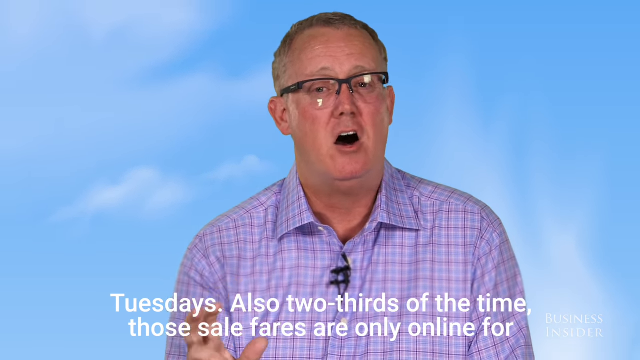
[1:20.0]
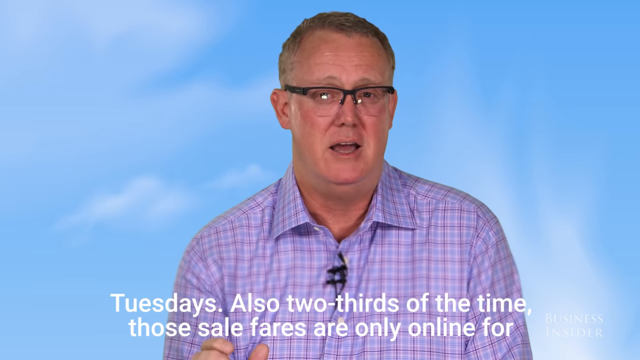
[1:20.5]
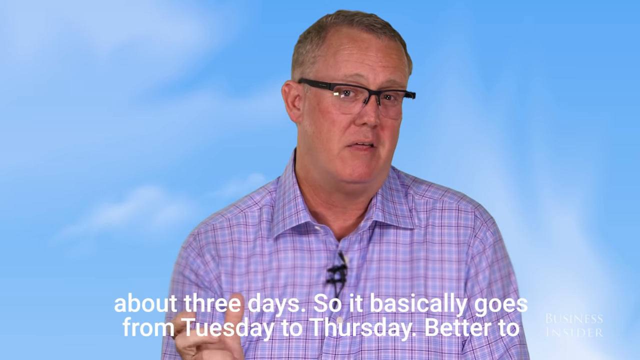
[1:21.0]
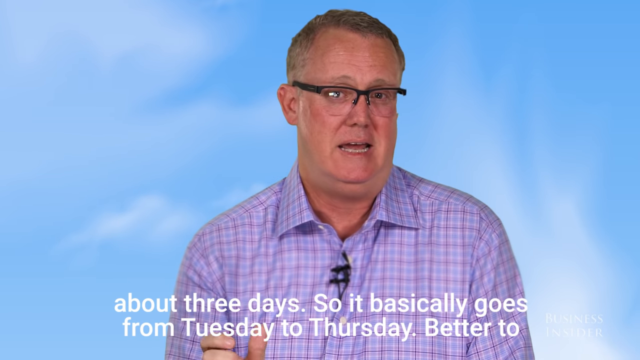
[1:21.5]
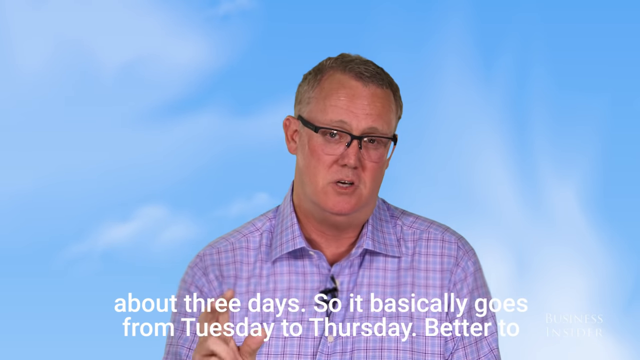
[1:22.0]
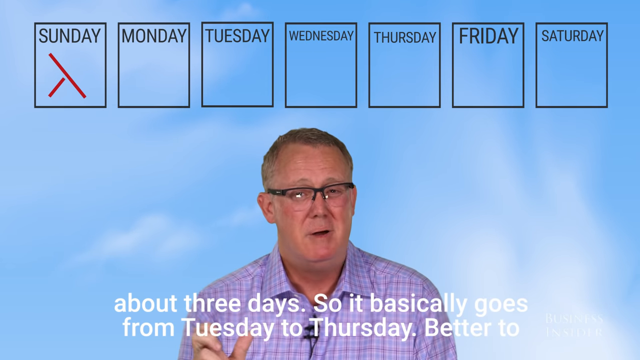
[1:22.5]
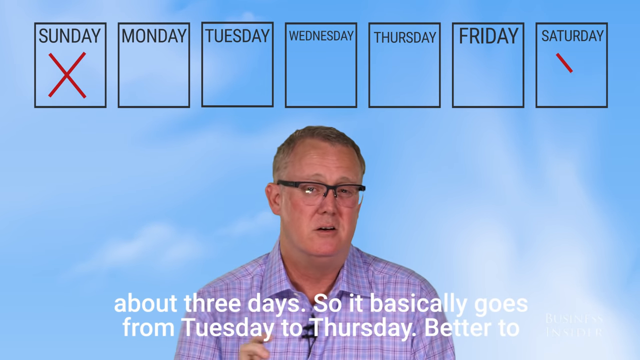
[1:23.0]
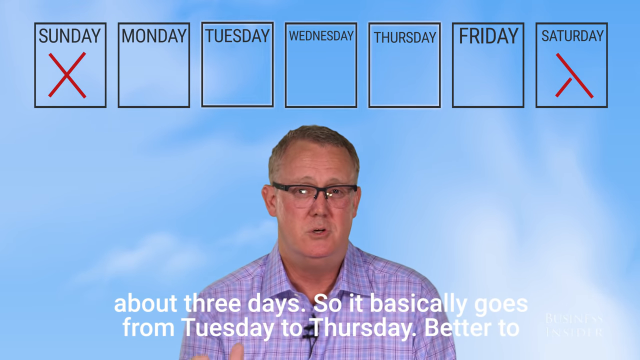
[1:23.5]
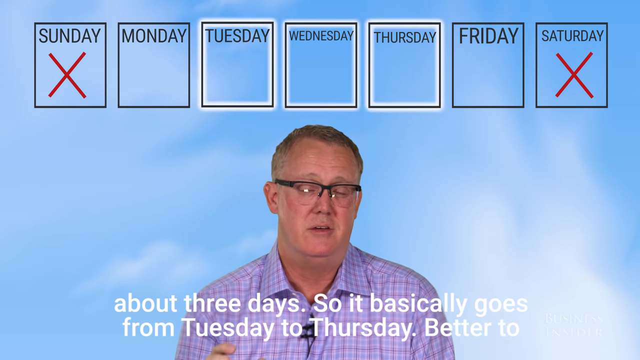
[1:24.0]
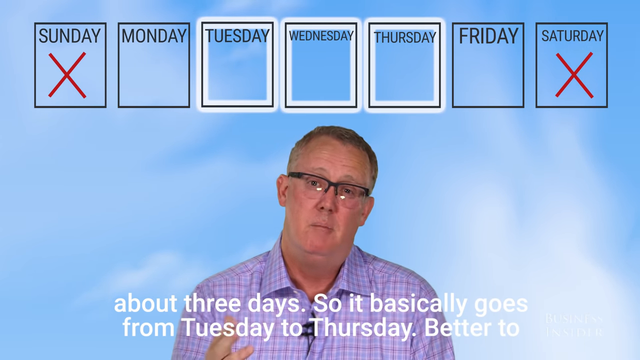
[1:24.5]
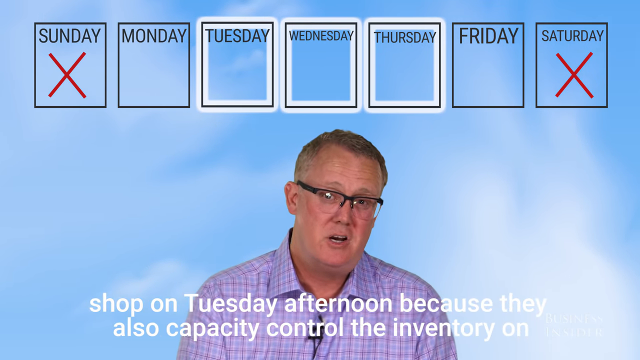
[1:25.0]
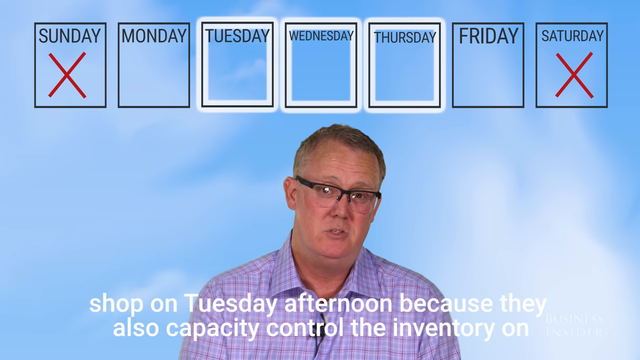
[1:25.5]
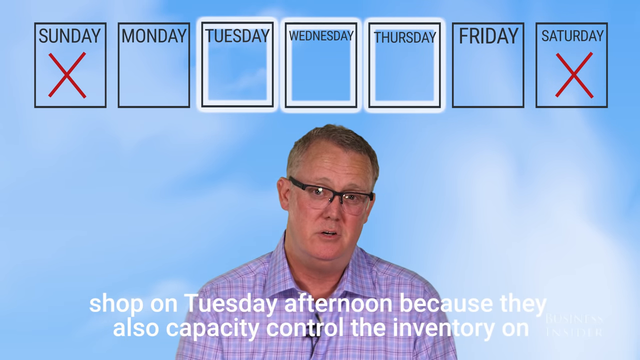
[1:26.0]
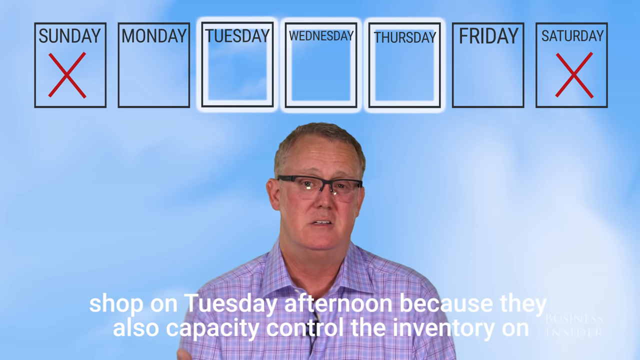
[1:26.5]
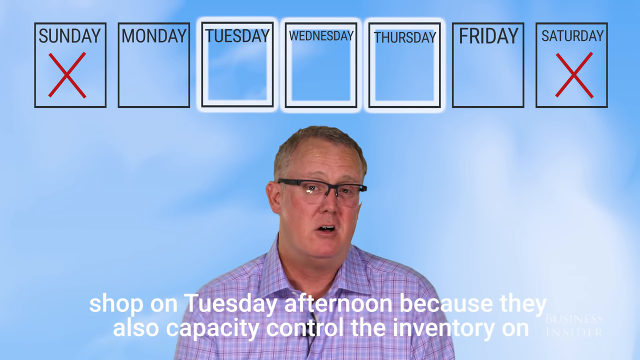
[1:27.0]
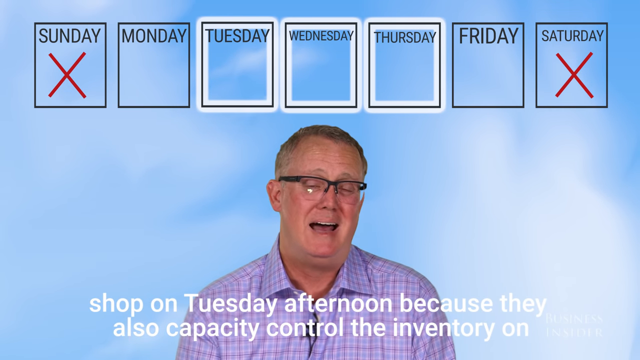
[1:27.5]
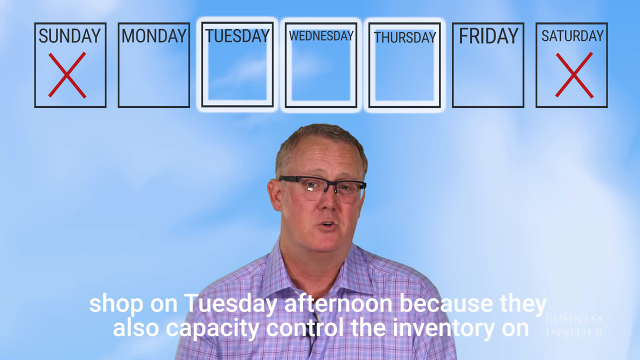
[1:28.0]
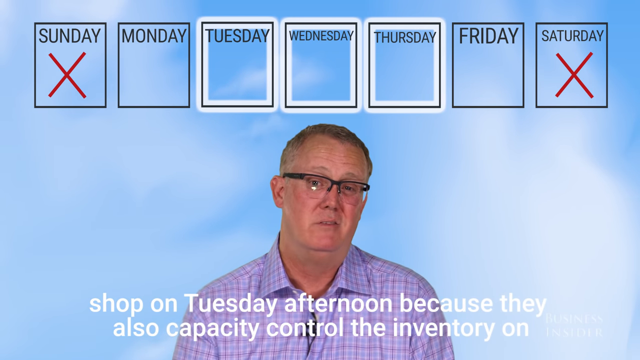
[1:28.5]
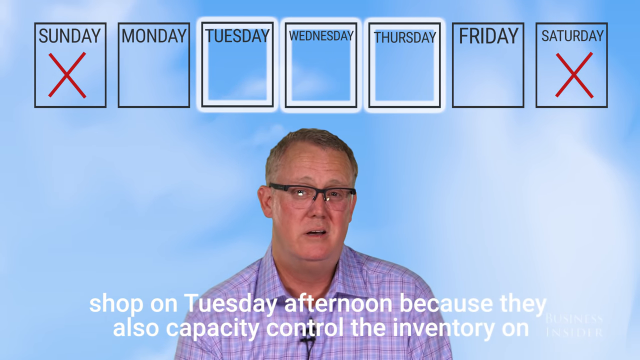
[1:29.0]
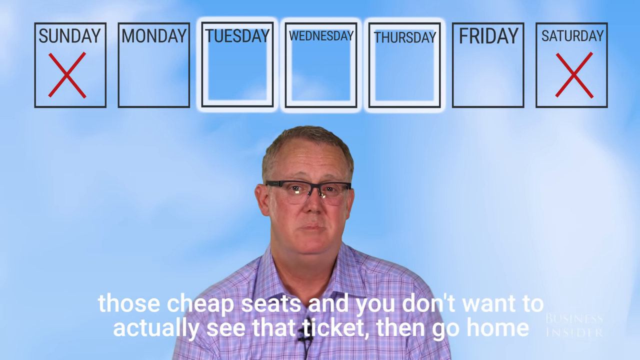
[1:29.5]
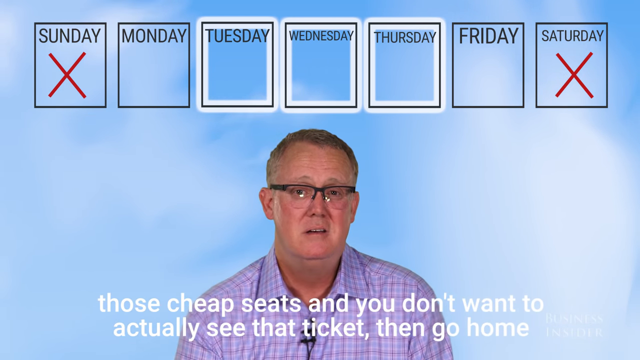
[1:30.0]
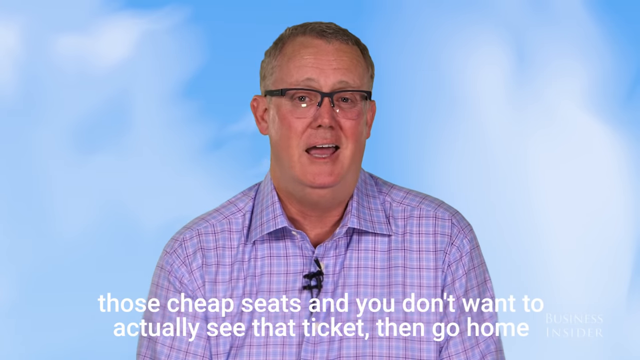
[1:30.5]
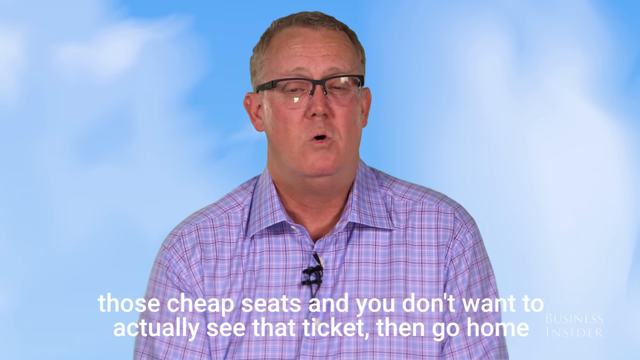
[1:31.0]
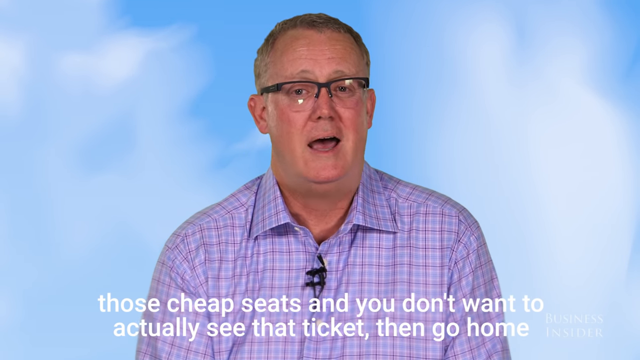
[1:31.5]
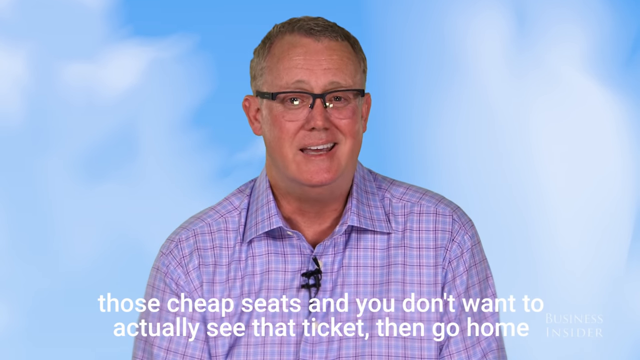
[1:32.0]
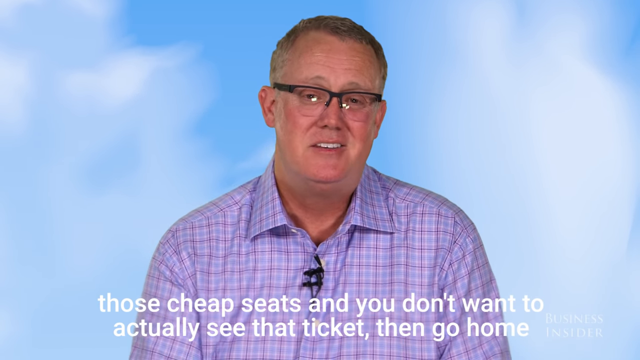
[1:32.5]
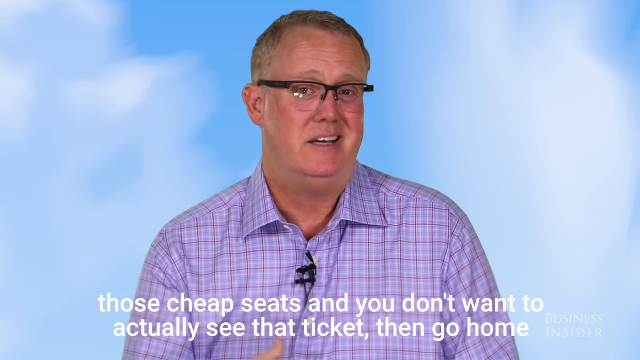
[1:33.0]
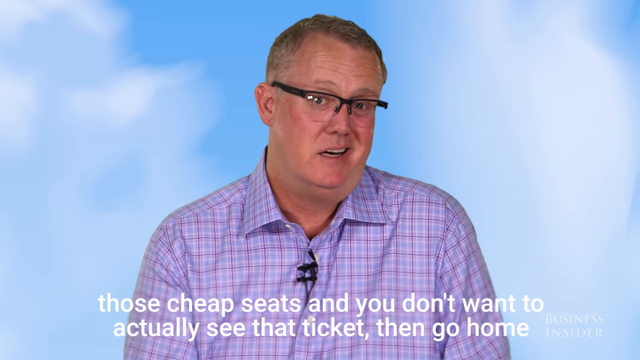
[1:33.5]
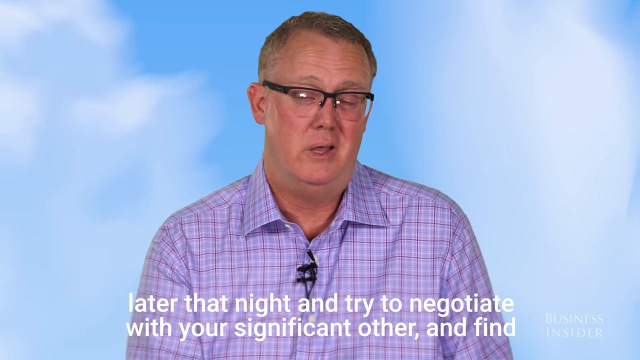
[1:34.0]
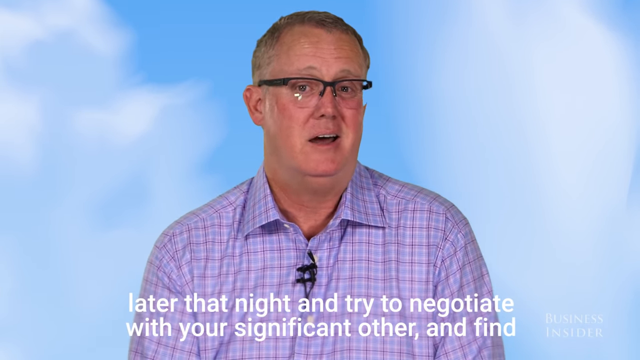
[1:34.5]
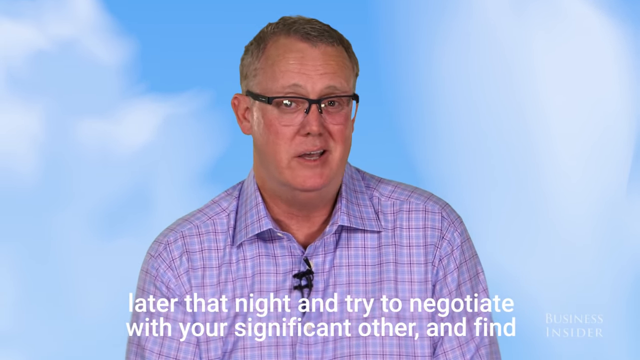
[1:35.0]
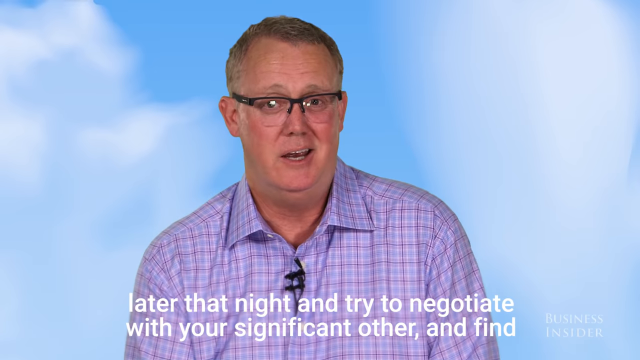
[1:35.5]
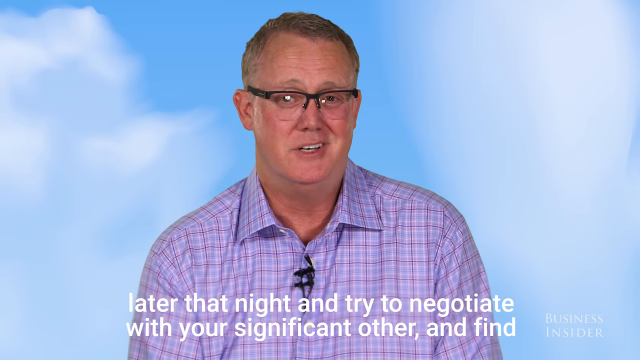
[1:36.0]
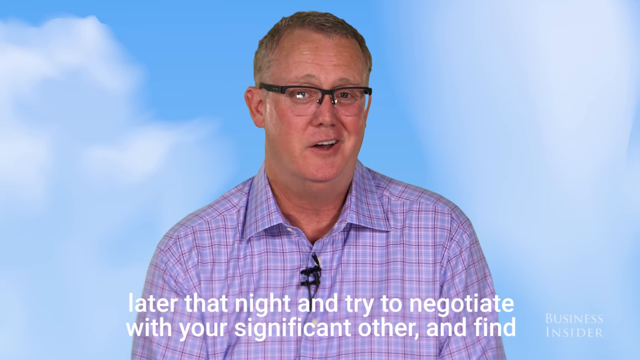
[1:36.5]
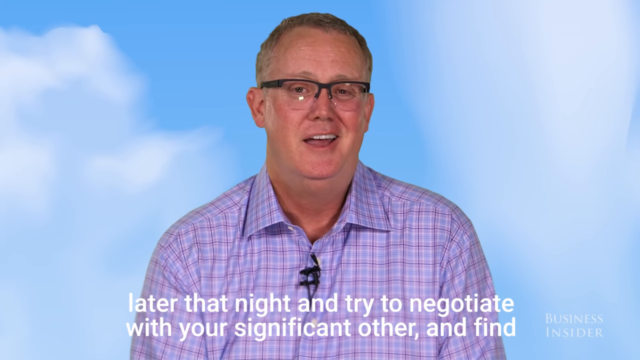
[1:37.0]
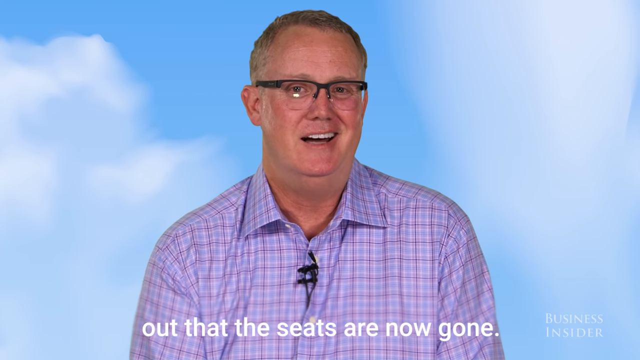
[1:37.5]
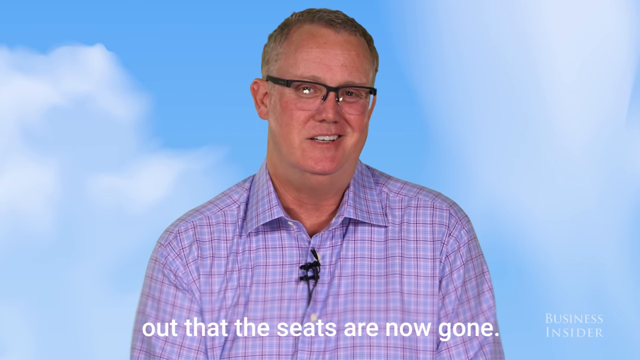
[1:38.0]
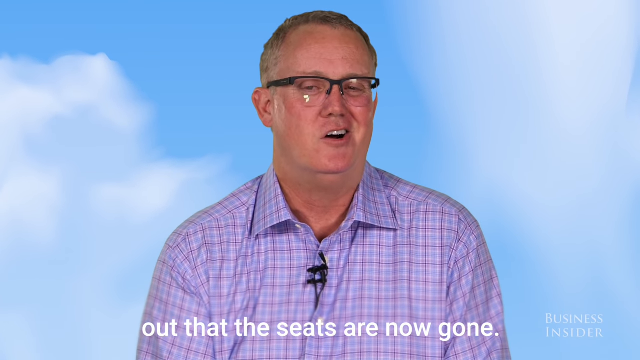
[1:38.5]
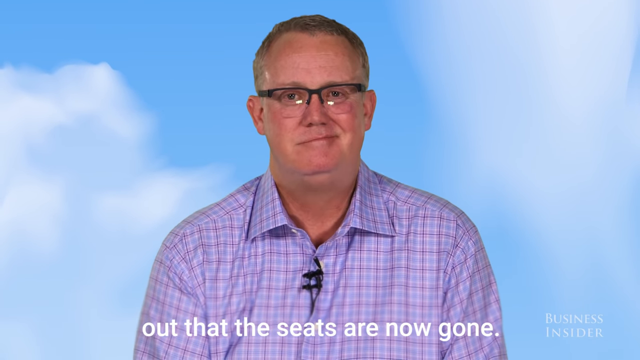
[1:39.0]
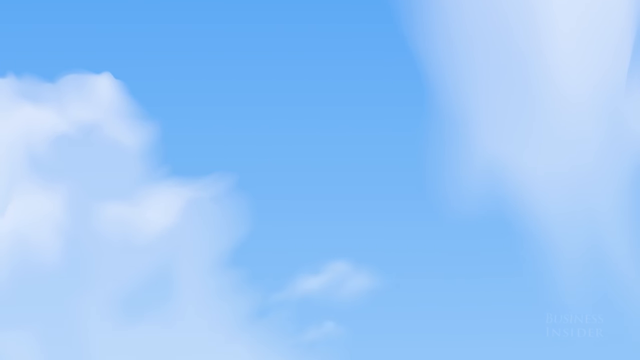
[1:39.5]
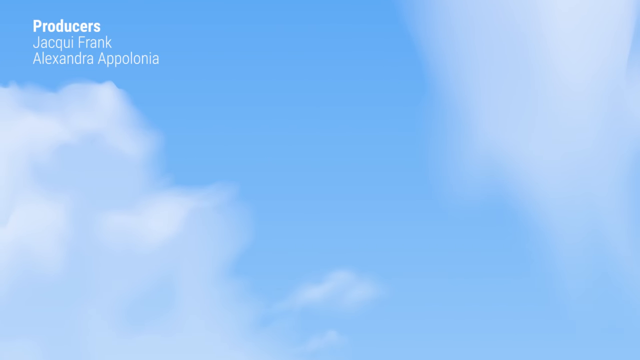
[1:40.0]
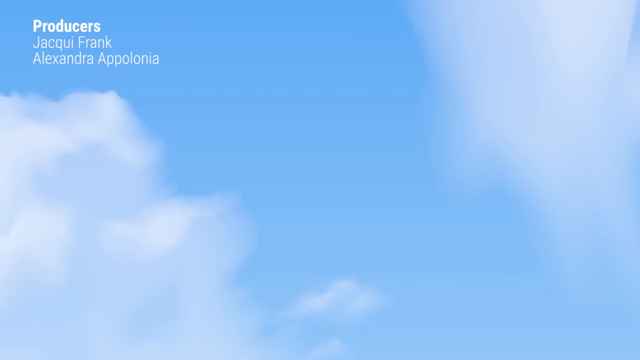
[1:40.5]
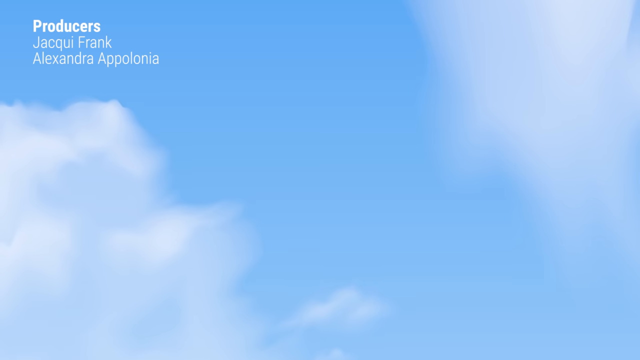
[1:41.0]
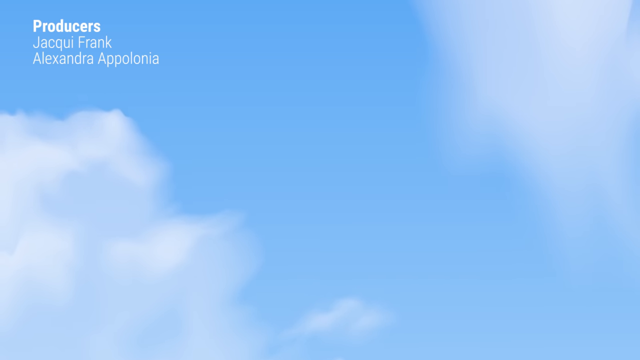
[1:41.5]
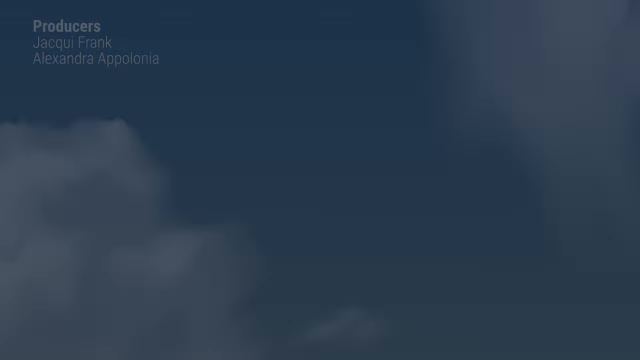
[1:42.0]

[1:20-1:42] The Business Insider video continues with information on when it is cheapest to purchase airline tickets online. The man giving the interview, named Sean Comey, wears a long-sleeved collared button-up shirt with a checkered pattern in light blue, white, and red. Subtitles at the bottom of the screen read: "Tuesdays. Also, two-thirds of the time, those sale fares are only online for about three days, so it basically goes from Tuesday to Thursday. Better to shop on Tuesday afternoon because they also have capacity control, the inventory, on those cheap seats and you don't want to actually see that ticket. Then go home later that night and try to negotiate with your significant other and find out that the seats are now gone." Credits then roll, showing the names of the producers.